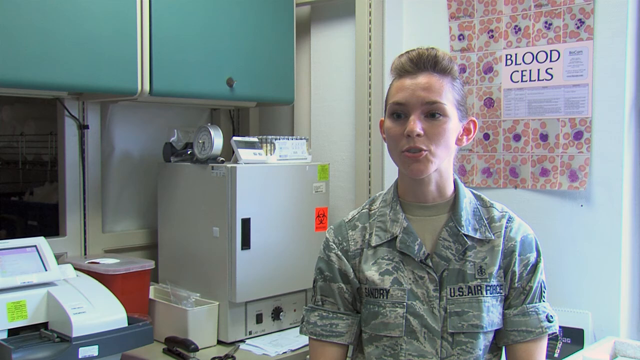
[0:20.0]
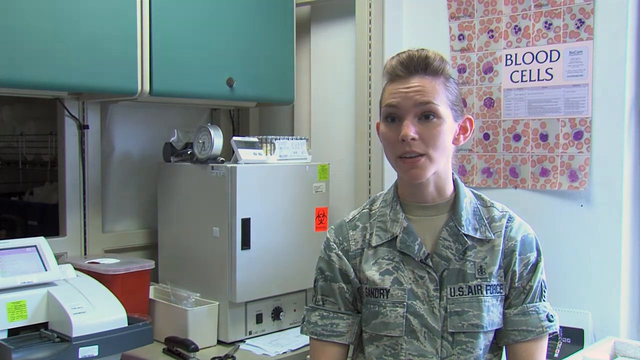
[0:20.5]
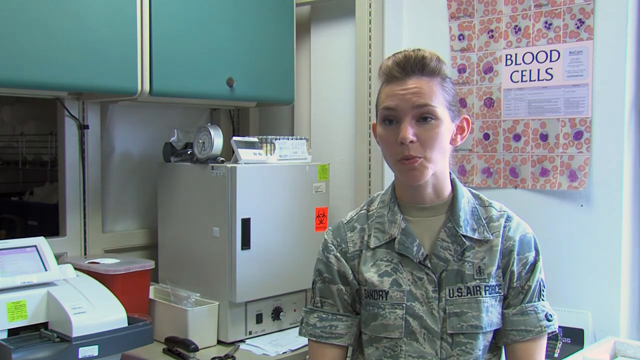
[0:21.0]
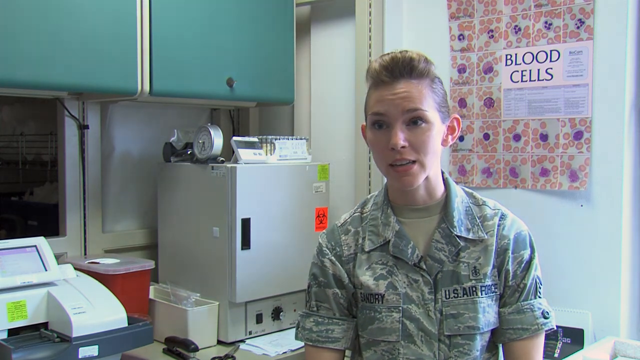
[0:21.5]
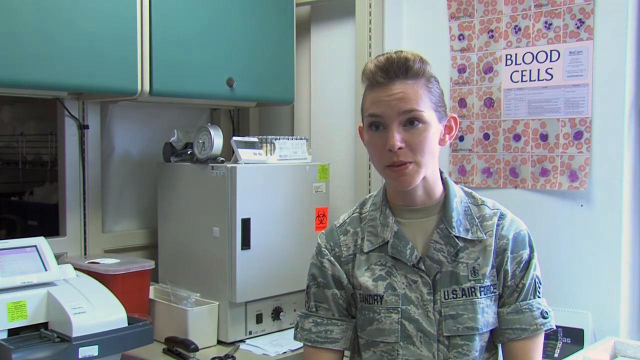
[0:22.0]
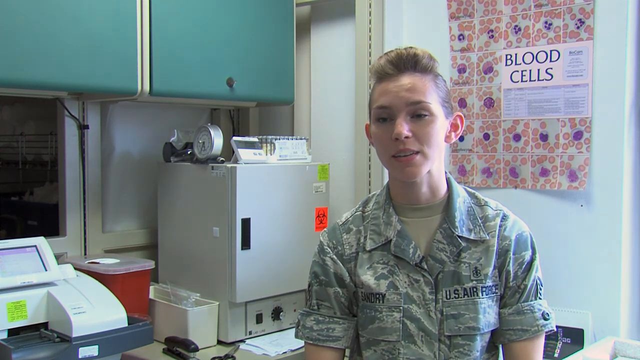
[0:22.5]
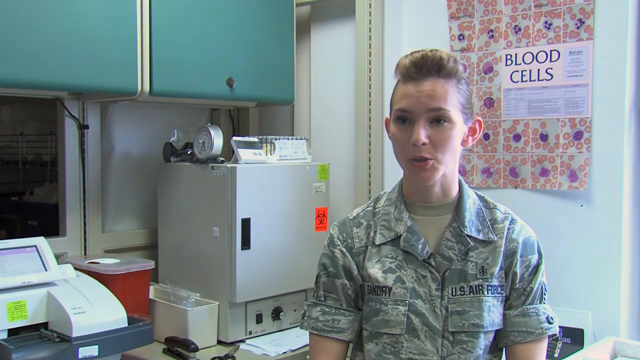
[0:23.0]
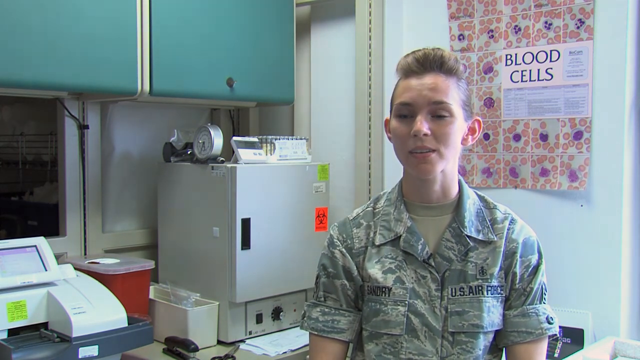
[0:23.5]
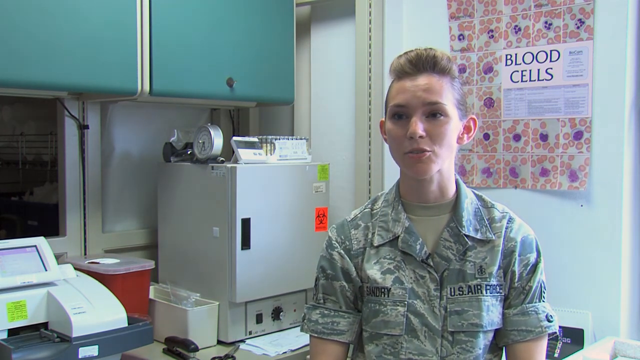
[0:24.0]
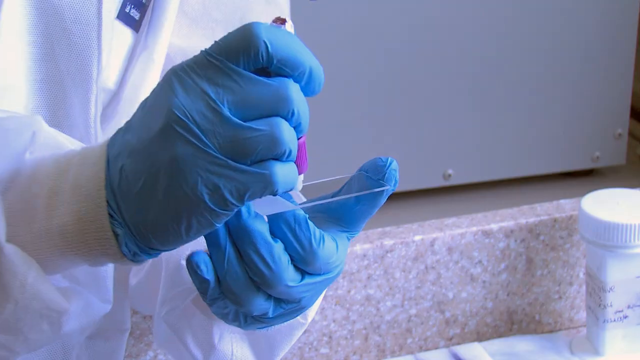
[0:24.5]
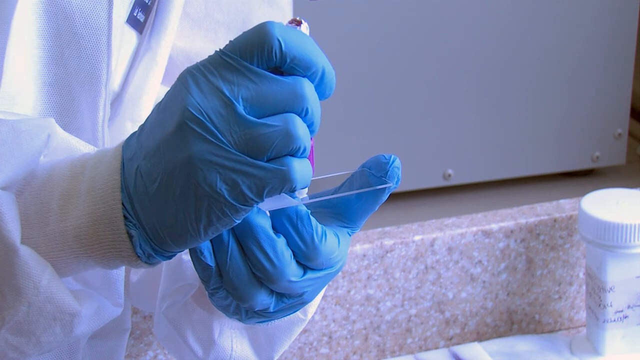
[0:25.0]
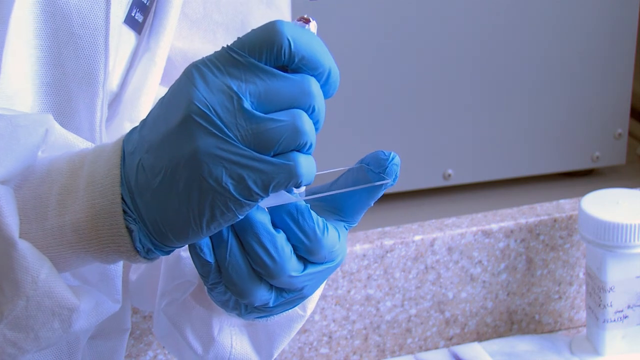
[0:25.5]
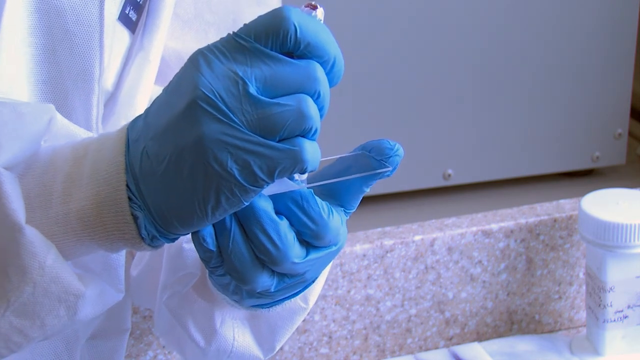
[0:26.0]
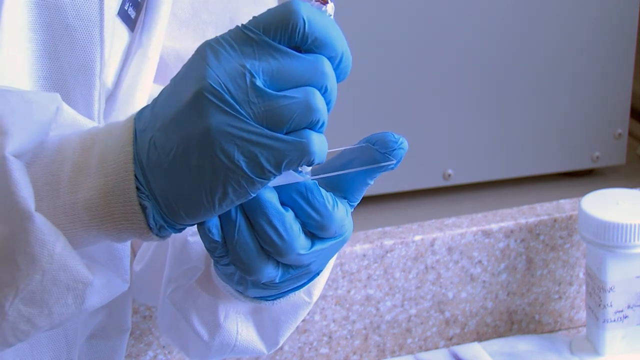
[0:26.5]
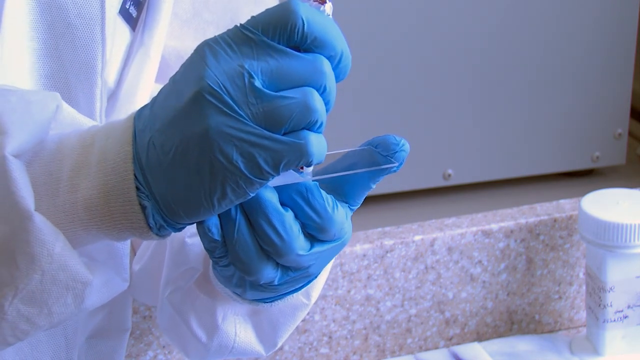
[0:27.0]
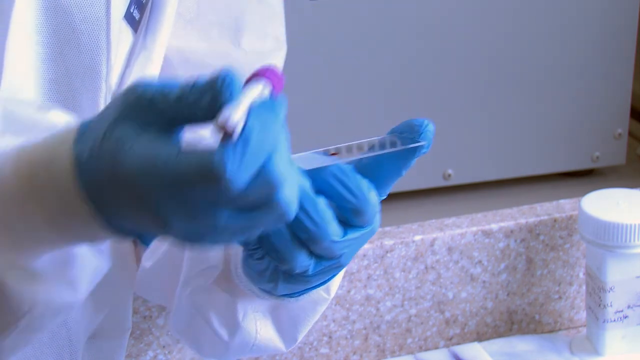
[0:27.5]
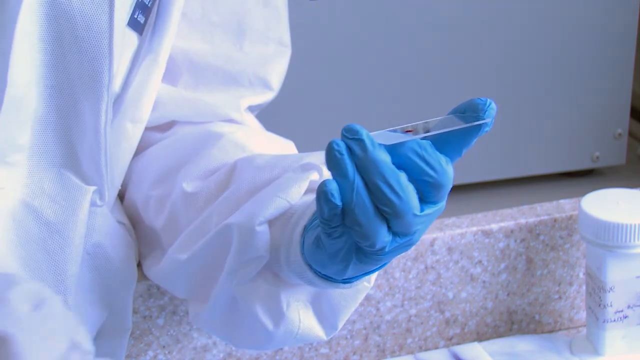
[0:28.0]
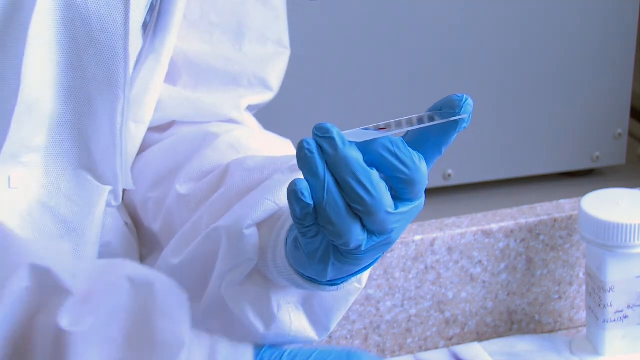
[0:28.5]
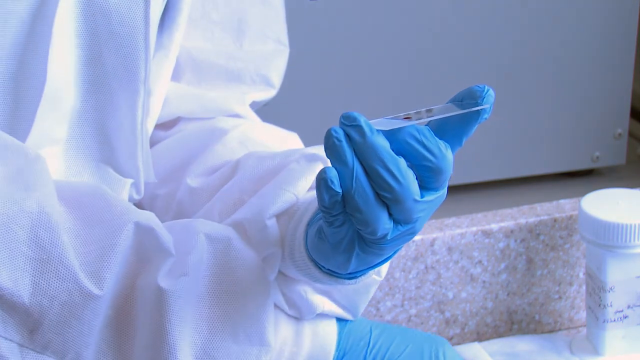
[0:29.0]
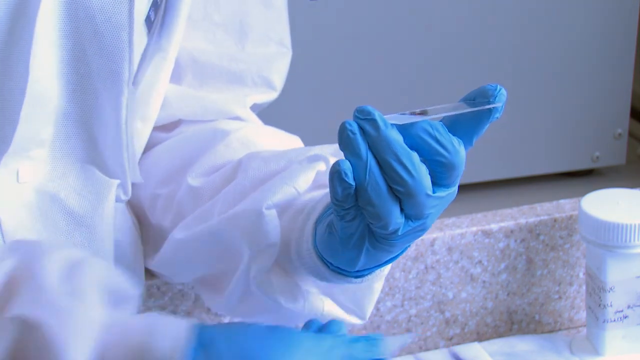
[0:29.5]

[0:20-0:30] The video cuts back to the same military woman, shown in an interview style, talking the whole time to someone off to the left. Then a purple tube is squeezed onto a plate surface; the contents appear to be the extracted blood, apparently about to be examined under a microscope.